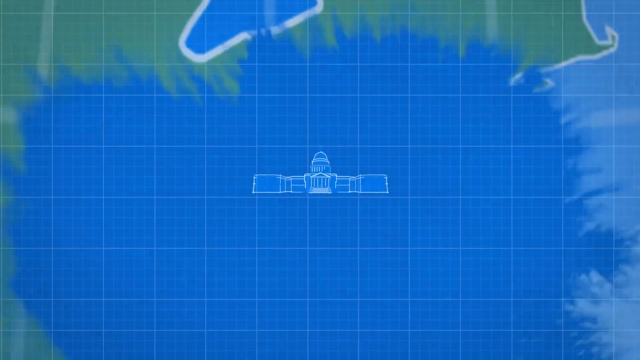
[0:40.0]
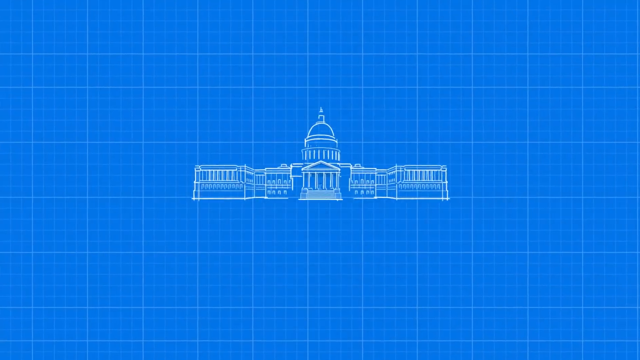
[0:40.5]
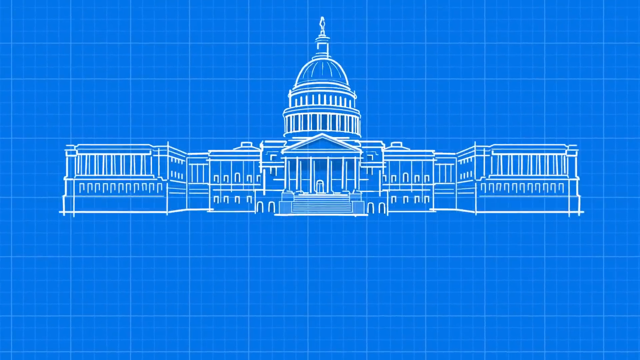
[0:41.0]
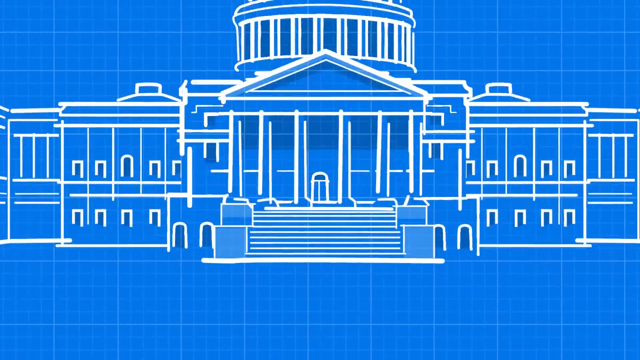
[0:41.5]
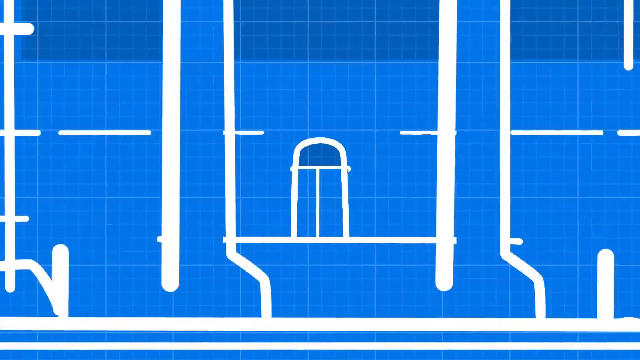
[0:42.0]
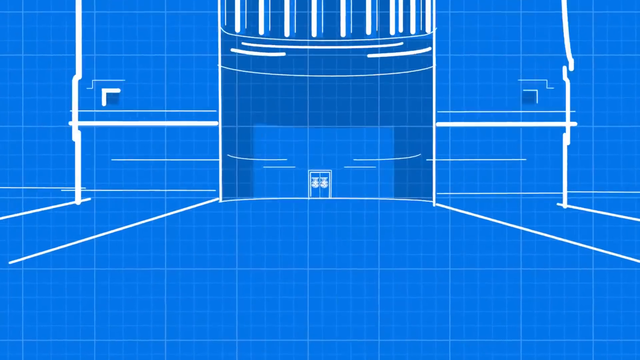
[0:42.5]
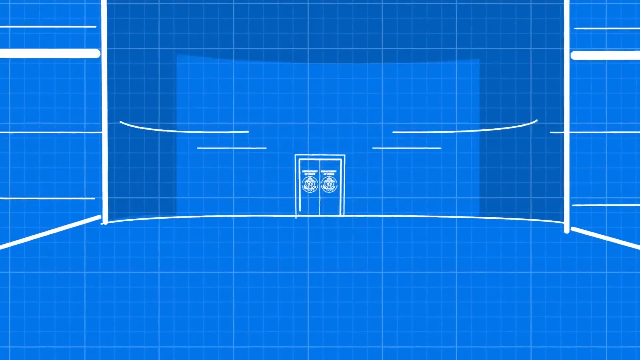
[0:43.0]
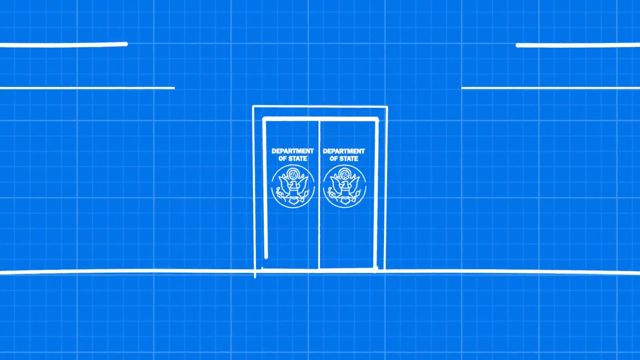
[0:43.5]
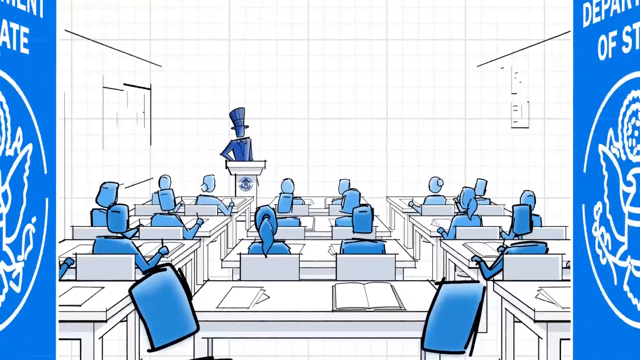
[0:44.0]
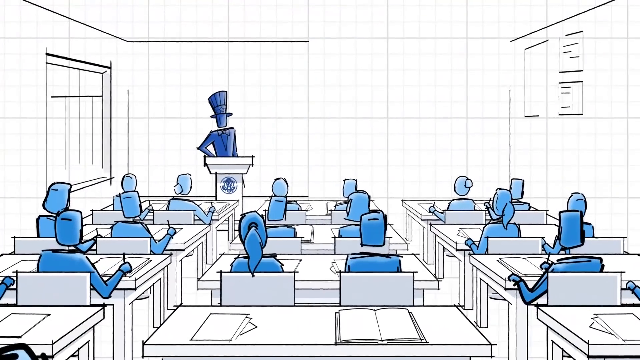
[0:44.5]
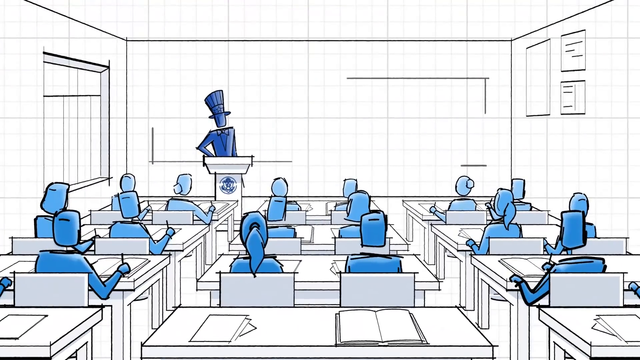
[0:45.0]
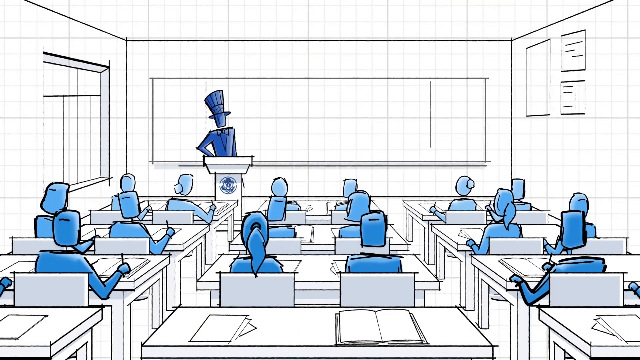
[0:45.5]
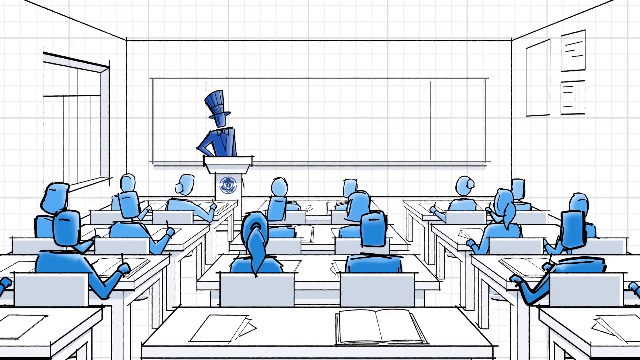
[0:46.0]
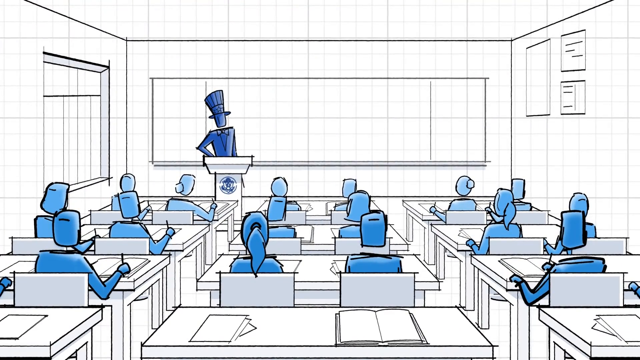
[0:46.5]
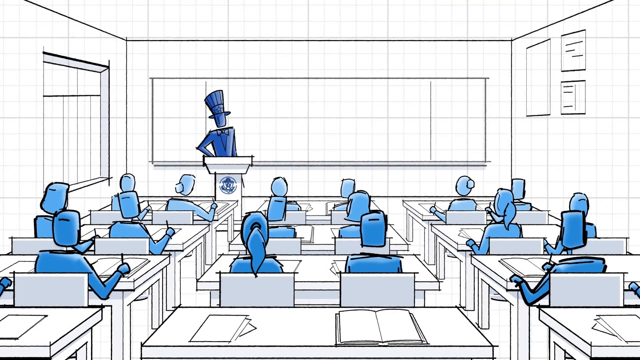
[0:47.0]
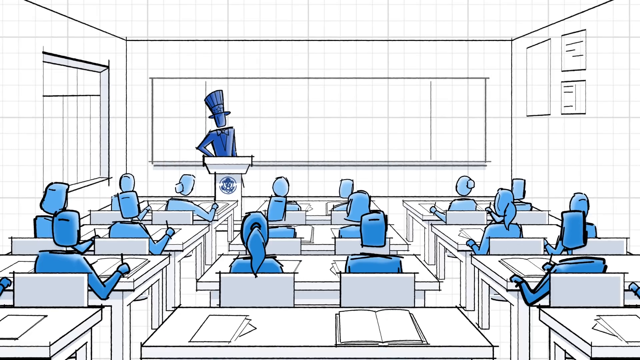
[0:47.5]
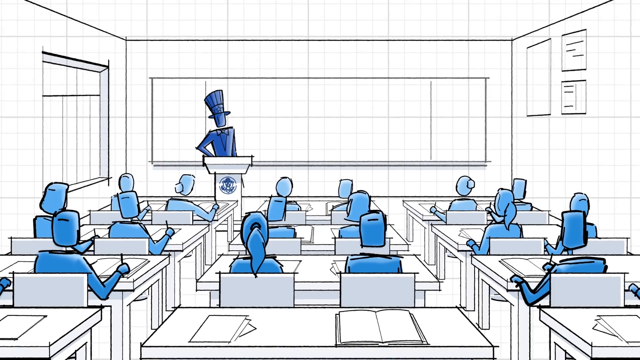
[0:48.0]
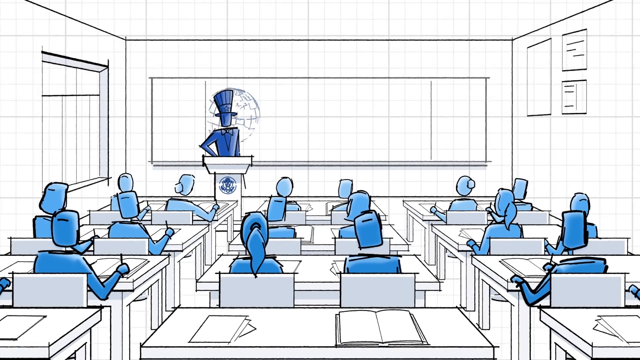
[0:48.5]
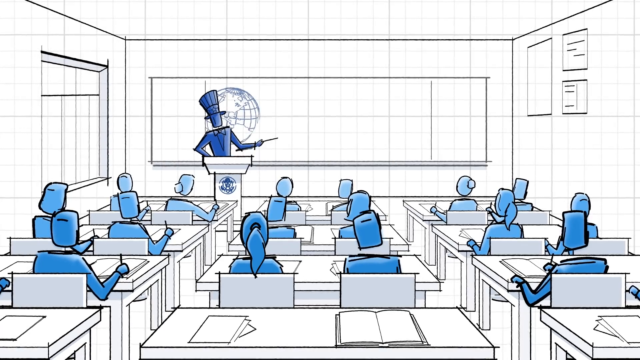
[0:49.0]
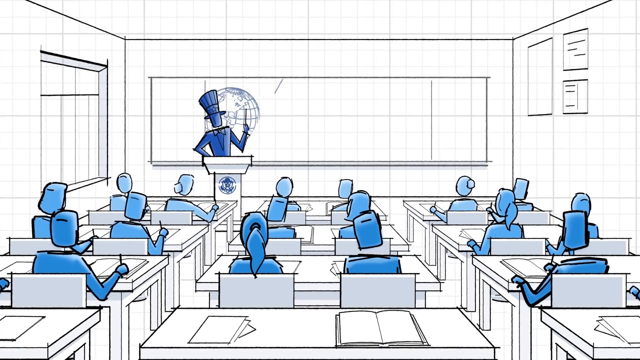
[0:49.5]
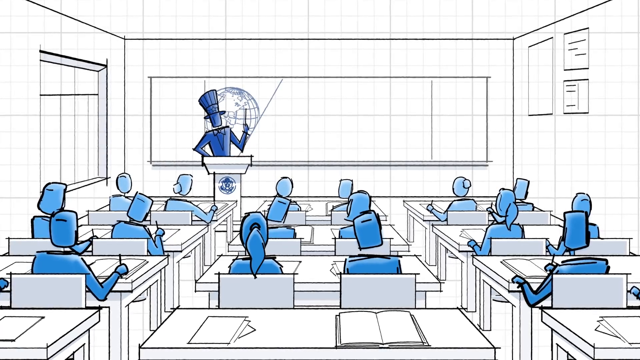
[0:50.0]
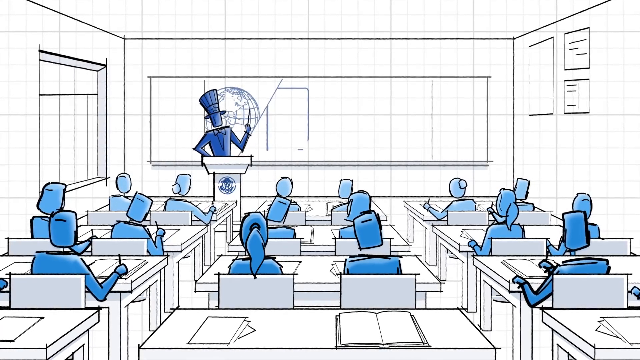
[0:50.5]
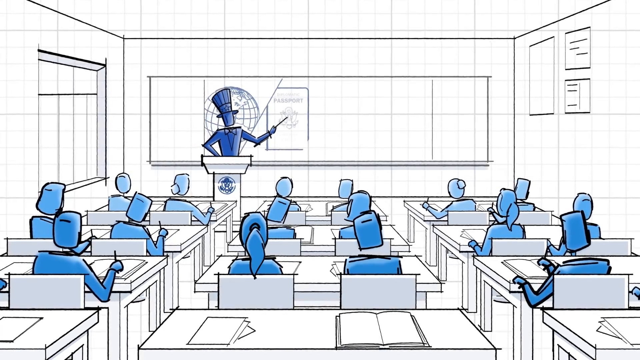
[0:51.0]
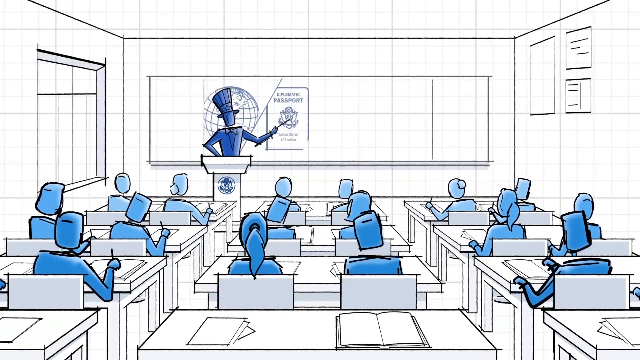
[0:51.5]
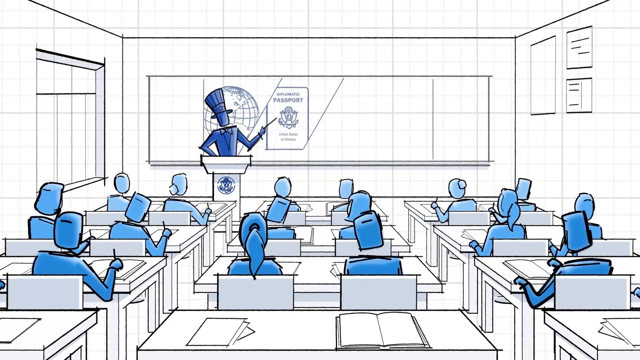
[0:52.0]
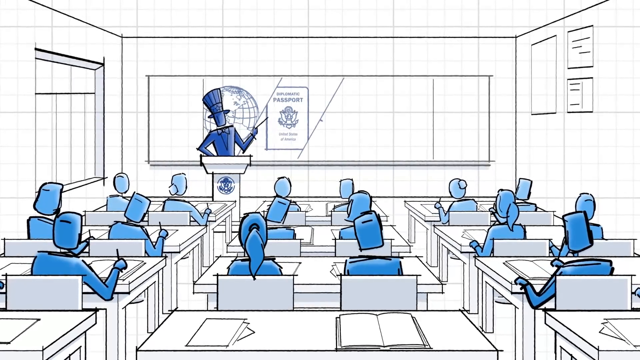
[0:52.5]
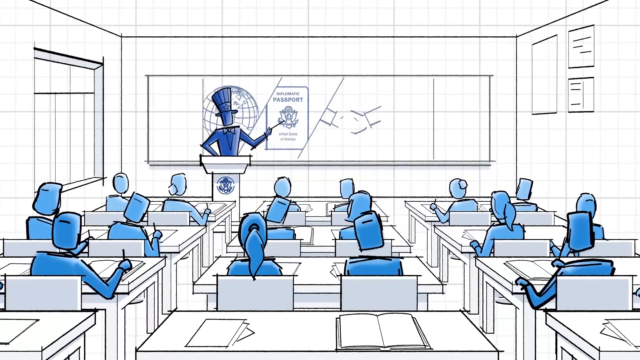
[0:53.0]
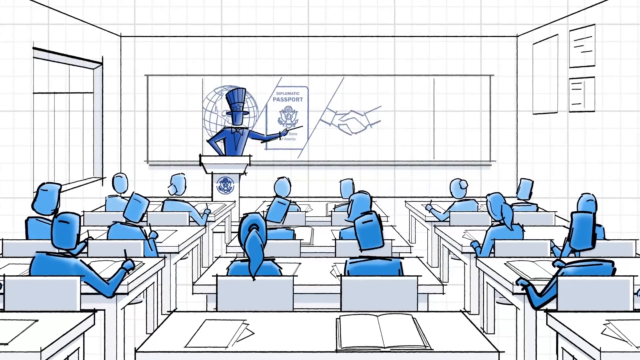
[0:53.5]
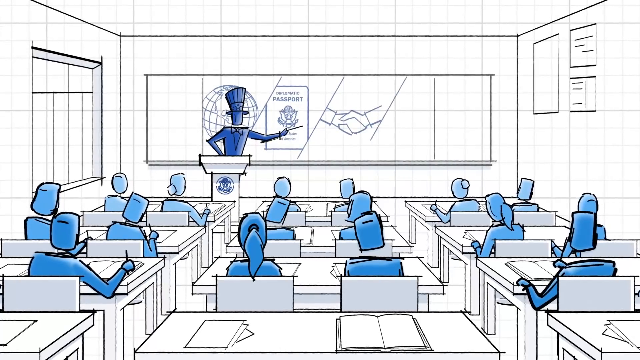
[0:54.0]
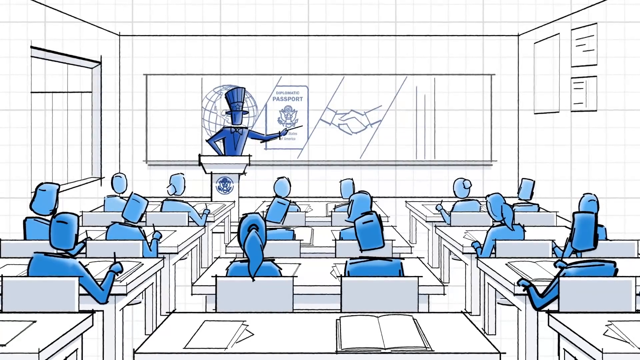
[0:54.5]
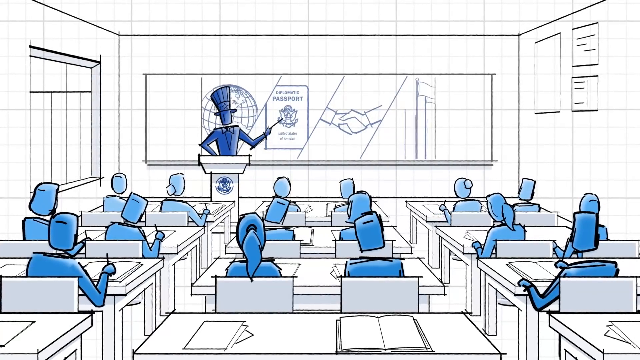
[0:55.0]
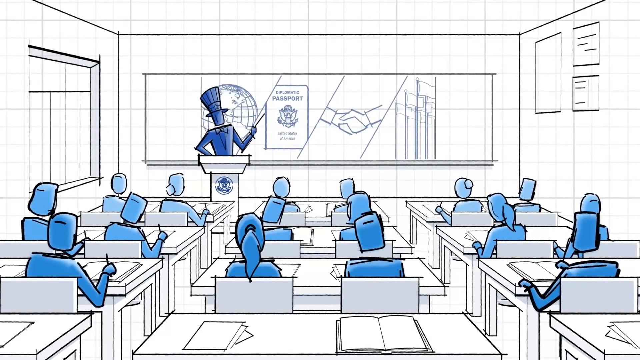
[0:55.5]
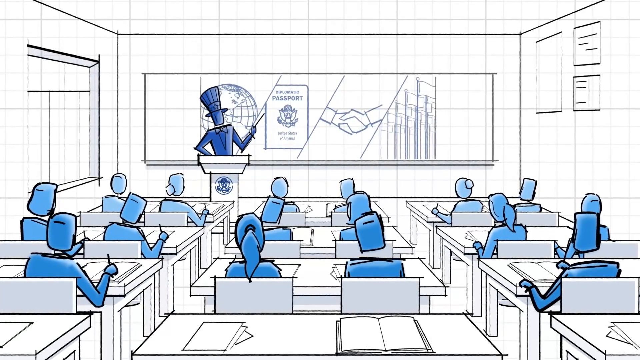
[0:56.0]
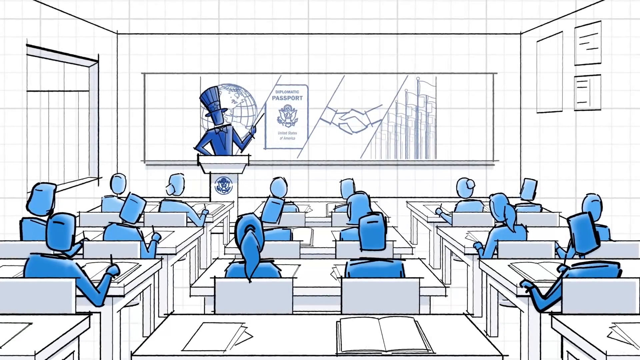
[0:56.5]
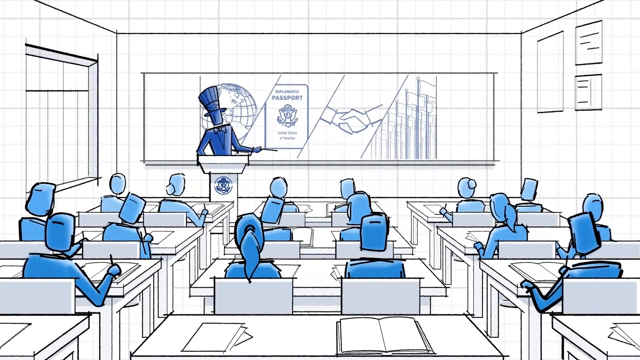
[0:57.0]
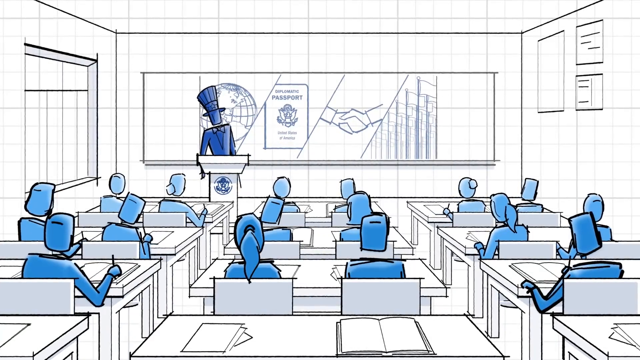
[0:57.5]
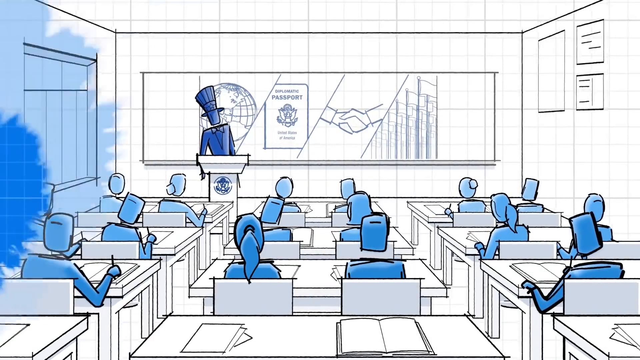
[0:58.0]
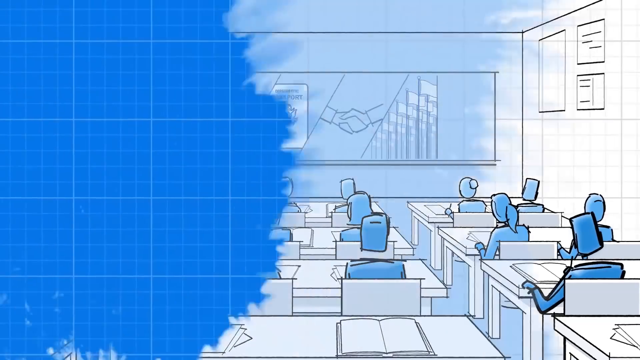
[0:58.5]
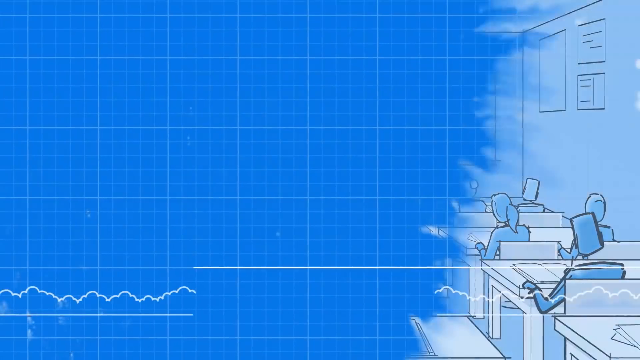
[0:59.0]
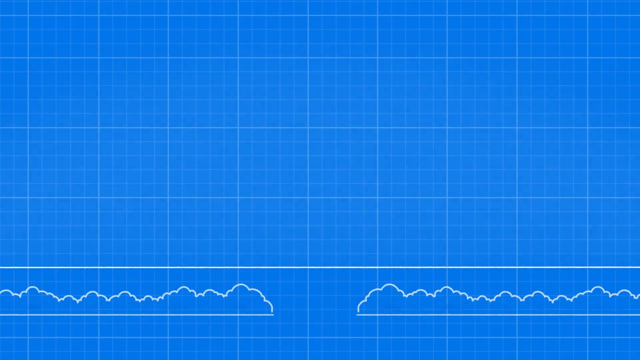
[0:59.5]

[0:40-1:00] The animation moves through the White House and ends up in a classroom with blue students, where a figure at a pole is standing and teaching. A picture of a passport appears. There are not many captions, and the screens move very fast, zooming quickly from one scene to the next.